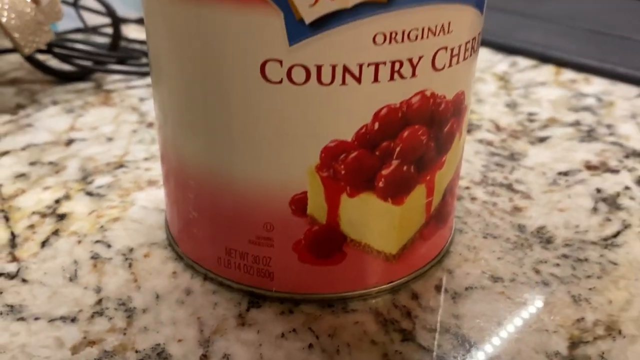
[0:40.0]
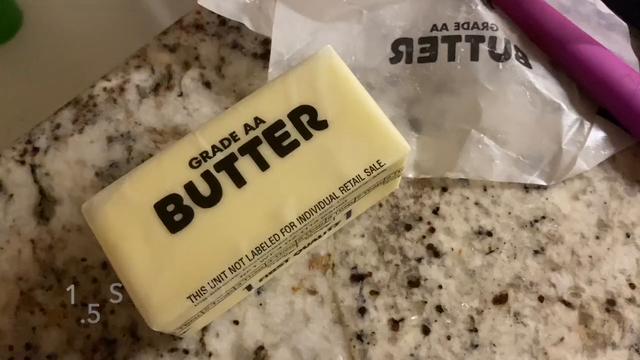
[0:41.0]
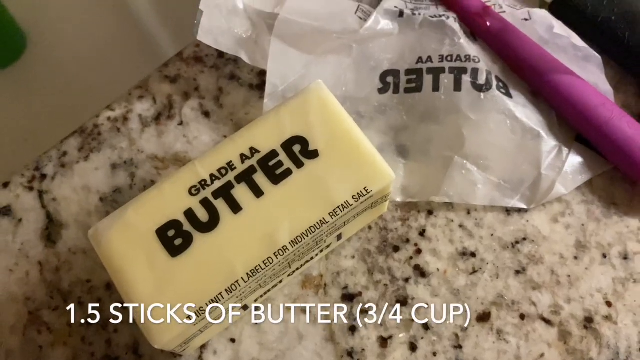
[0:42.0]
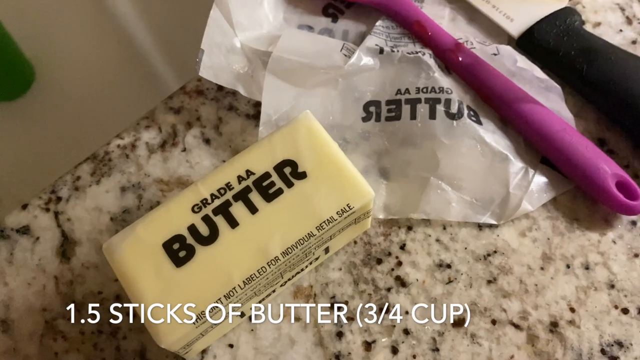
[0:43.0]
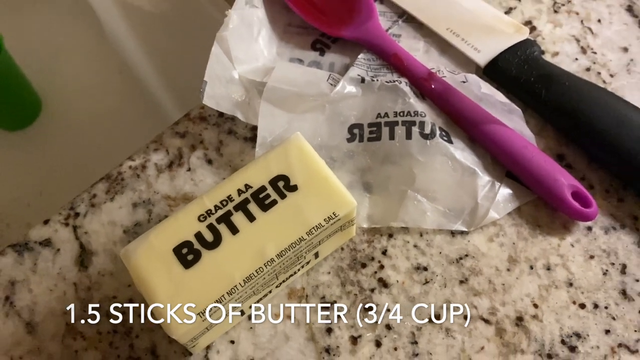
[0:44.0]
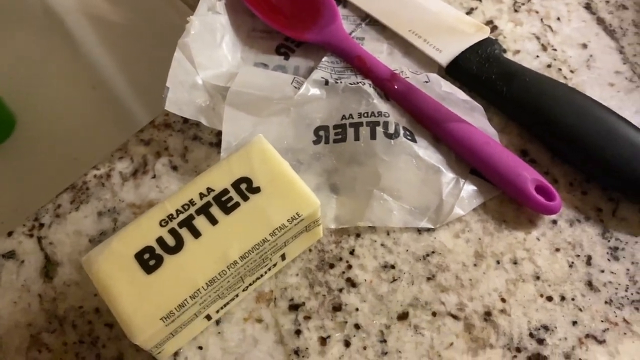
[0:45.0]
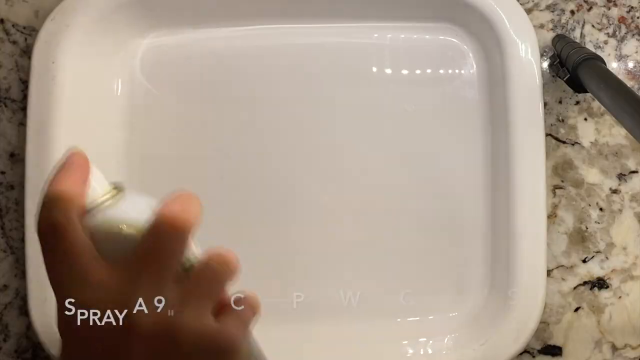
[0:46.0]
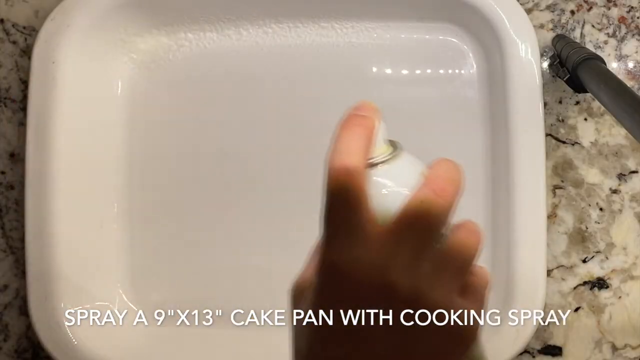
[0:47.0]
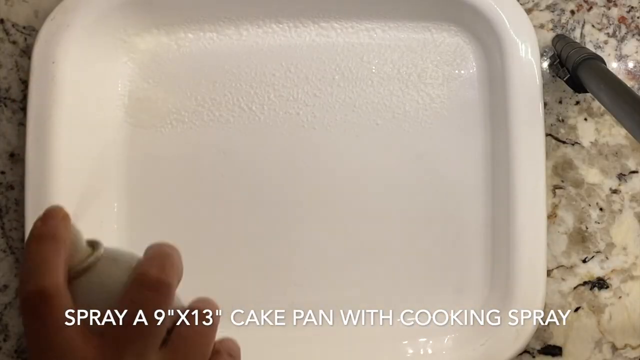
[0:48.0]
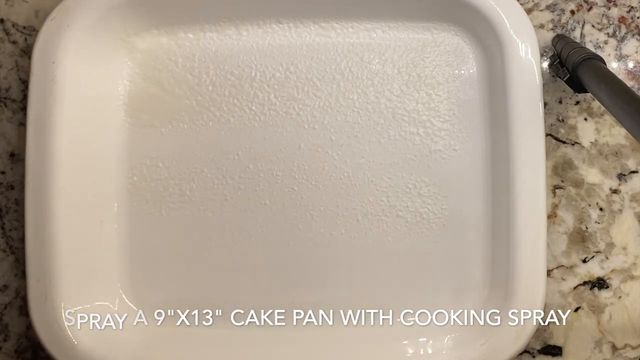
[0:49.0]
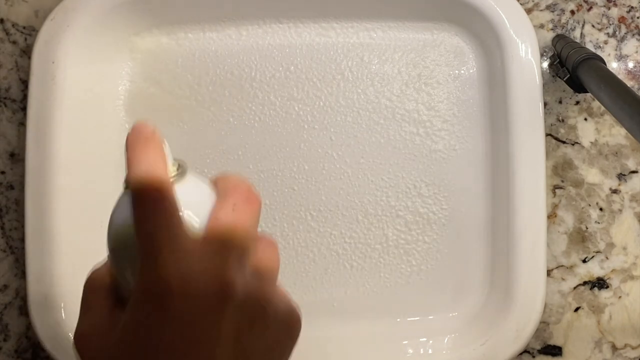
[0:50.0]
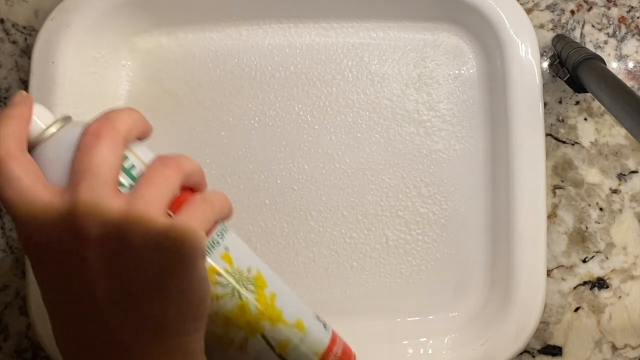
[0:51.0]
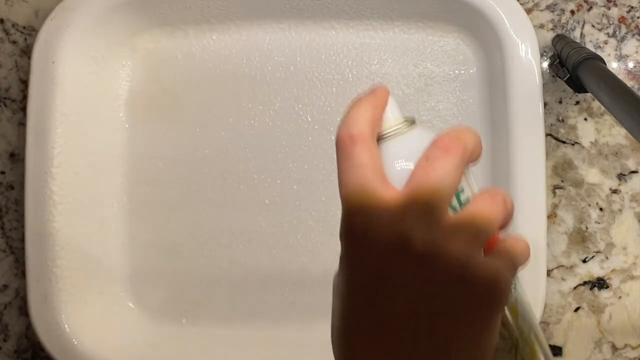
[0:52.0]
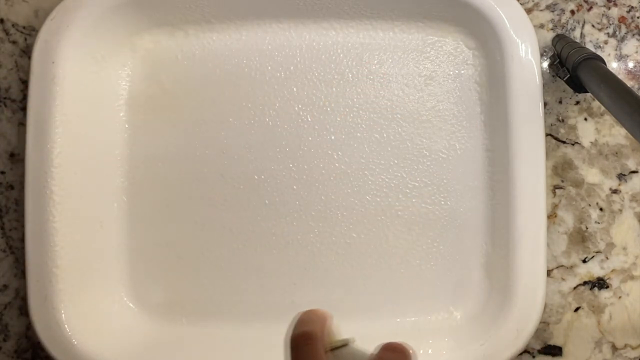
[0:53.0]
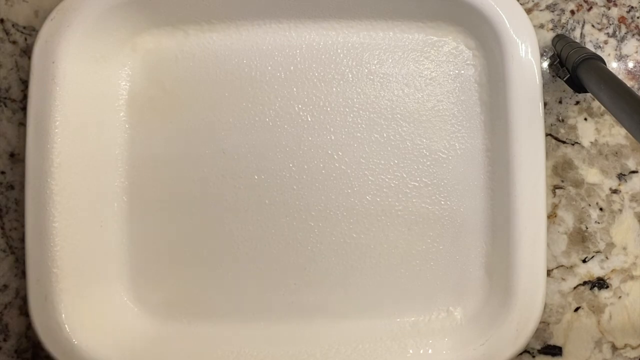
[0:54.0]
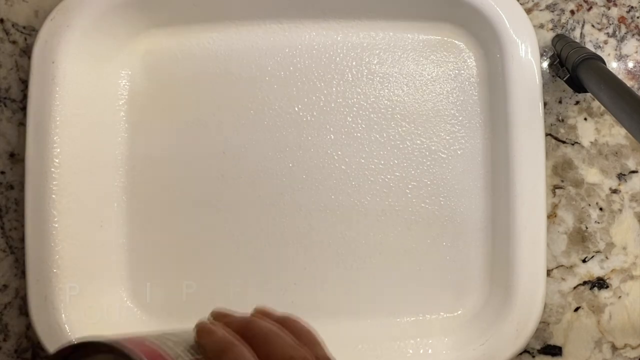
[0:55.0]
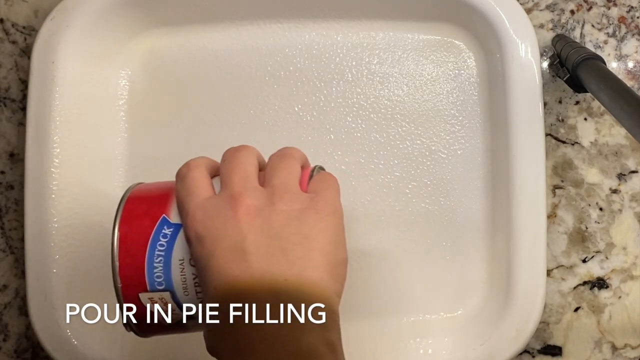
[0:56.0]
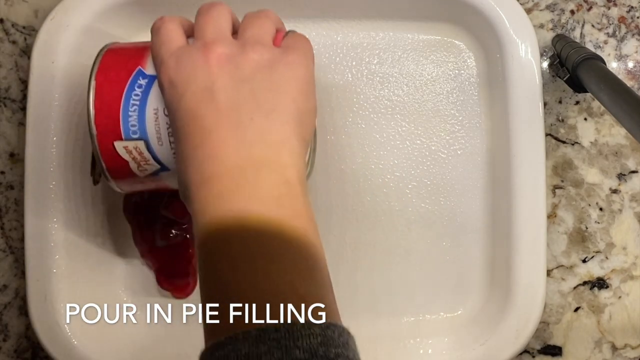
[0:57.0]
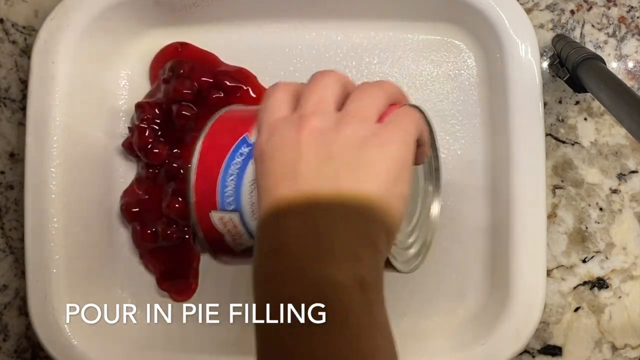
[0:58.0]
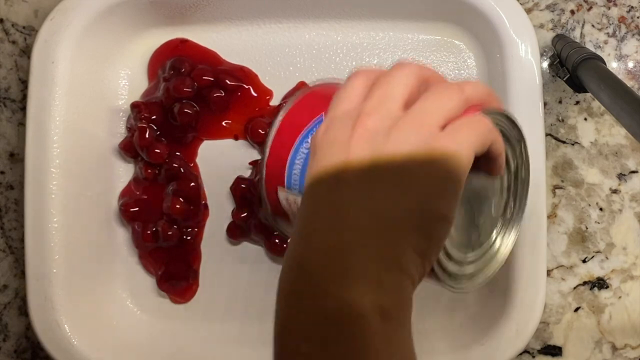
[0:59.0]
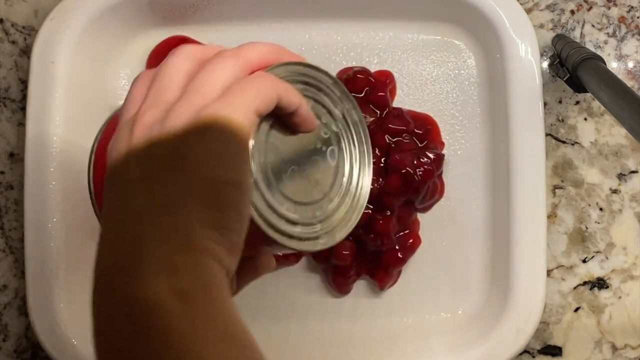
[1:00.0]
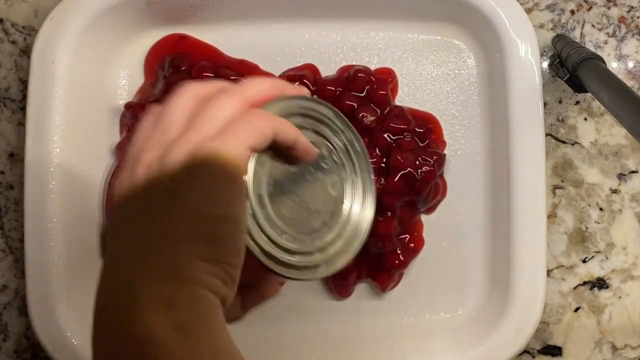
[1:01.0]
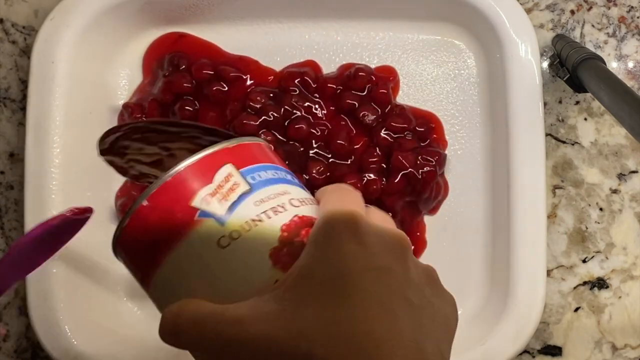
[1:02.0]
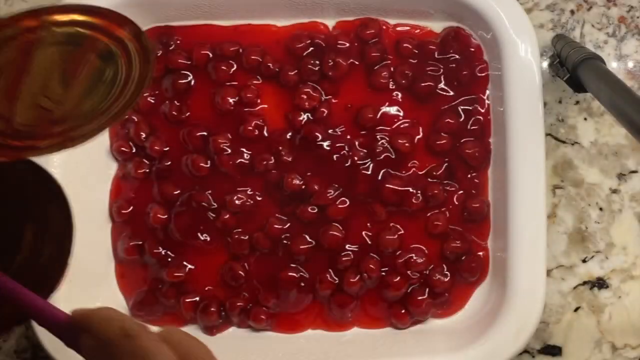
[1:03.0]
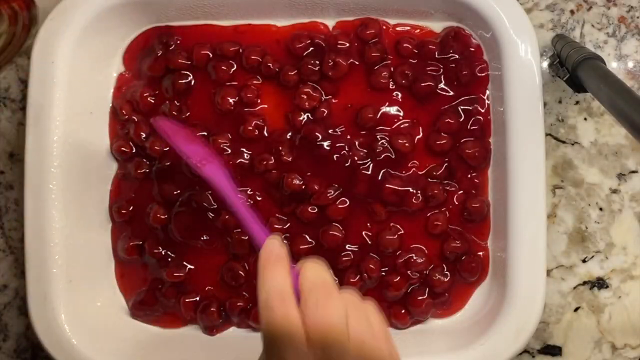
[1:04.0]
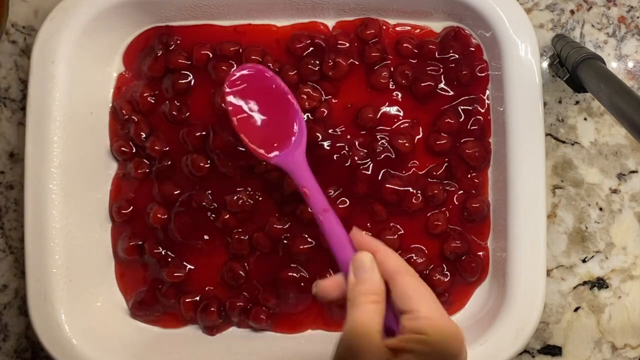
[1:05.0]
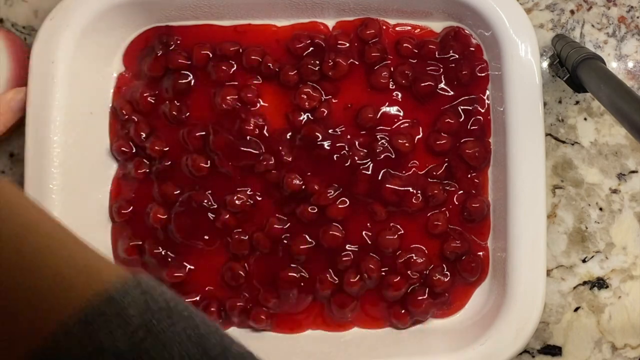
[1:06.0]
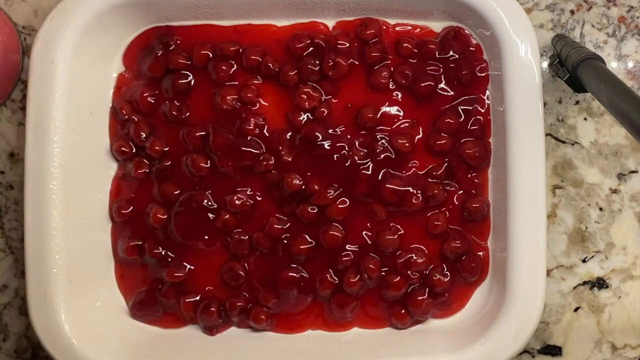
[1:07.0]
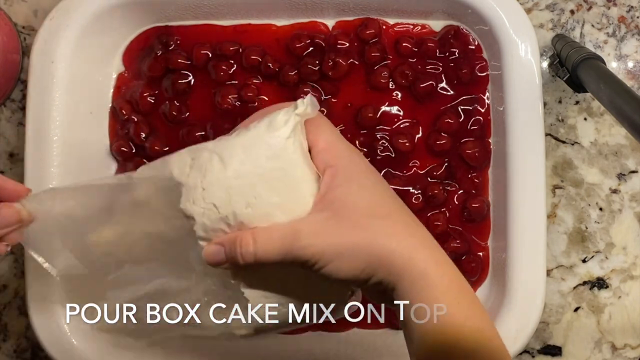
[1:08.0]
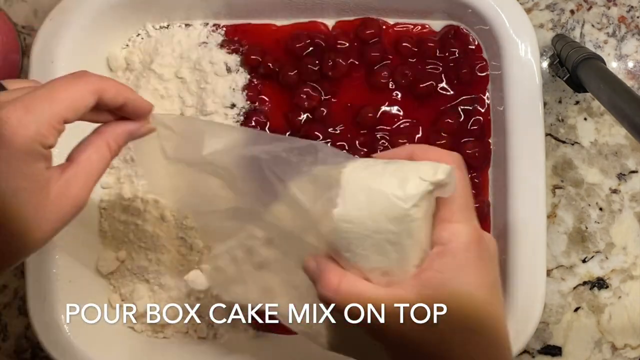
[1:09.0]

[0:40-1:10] A close-up shows a tub of Duncan Hines original country cherry. Next, a stick of grade AA butter is on a blotchy-looking grey, black and white countertop. As the camera pans backwards, a purple spatula and a knife with a black handle are visible beside the butter on the right side. A person's hand emerges and sprays the bottom of a square white ceramic baking dish with oil from a spray can. The hand then pours the cherry pie filling into the baking dish, emptying the entire can and coating the bottom with cherries and cherry liquid. Next, the hand pours the box cake mix on top of the cherries, spreading it evenly to cover the cherry layer at the bottom of the white baking dish.